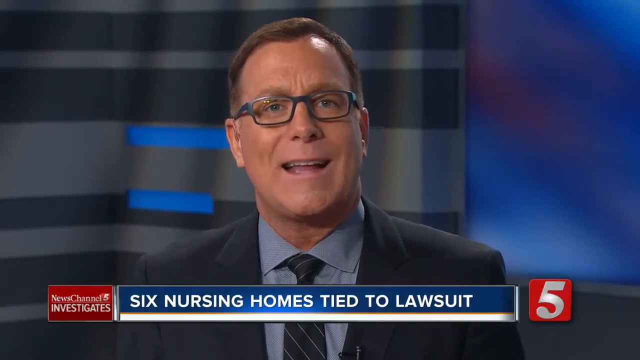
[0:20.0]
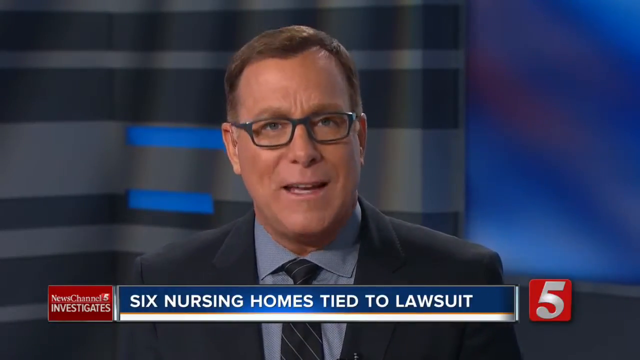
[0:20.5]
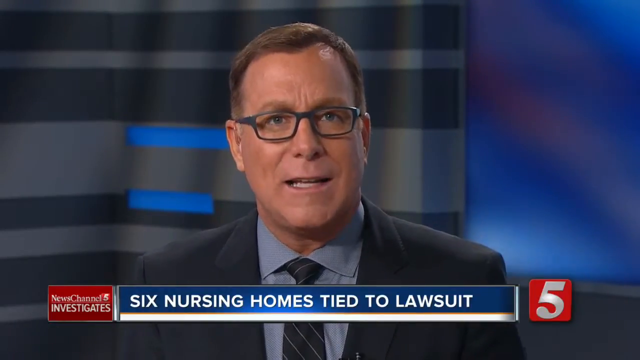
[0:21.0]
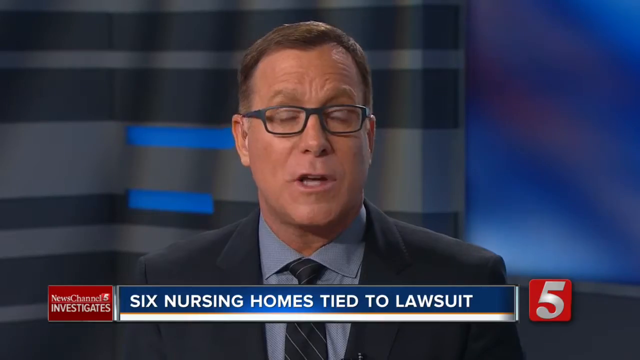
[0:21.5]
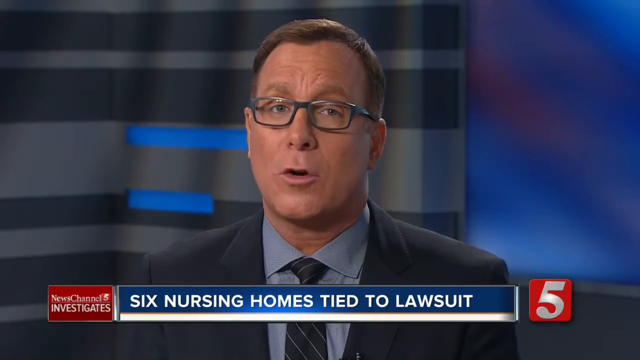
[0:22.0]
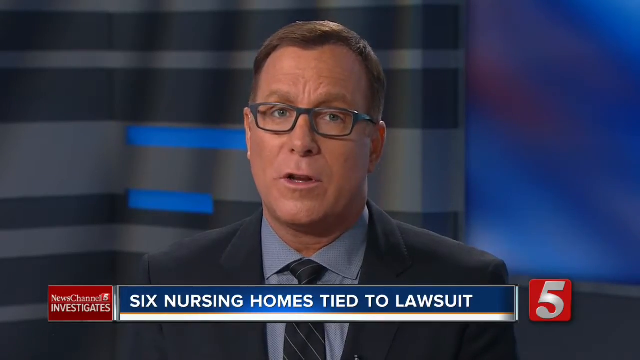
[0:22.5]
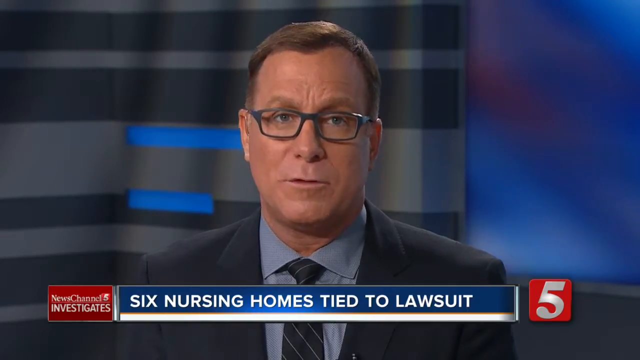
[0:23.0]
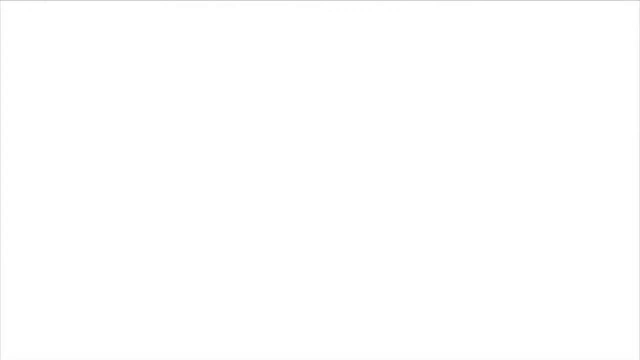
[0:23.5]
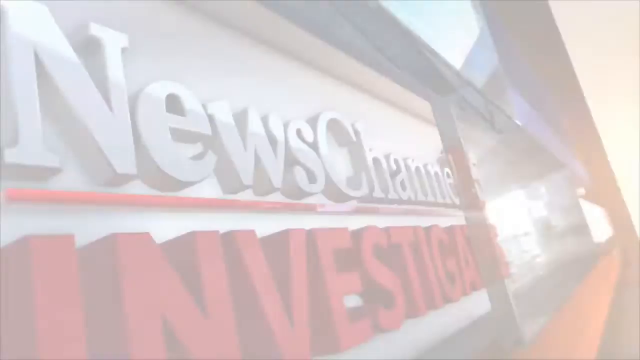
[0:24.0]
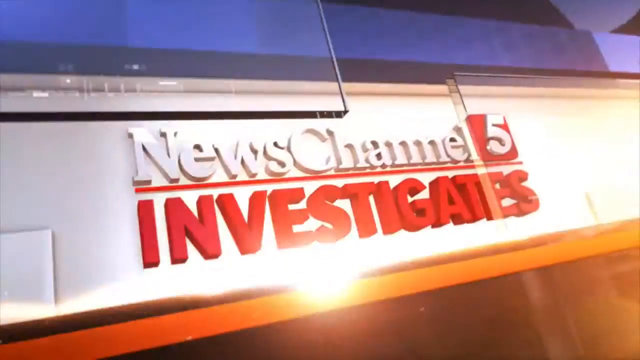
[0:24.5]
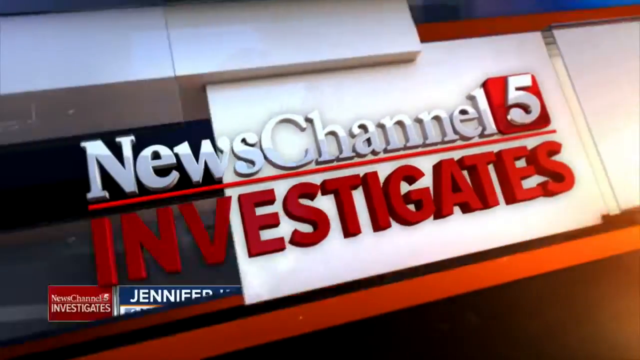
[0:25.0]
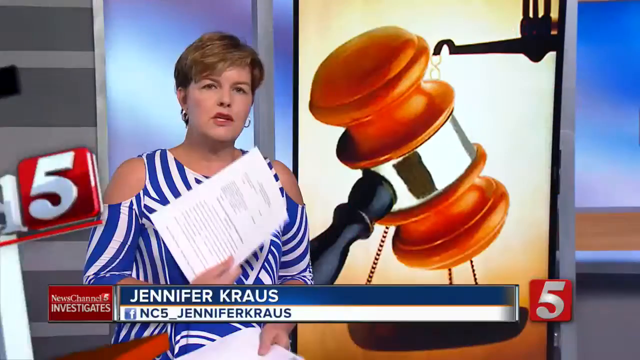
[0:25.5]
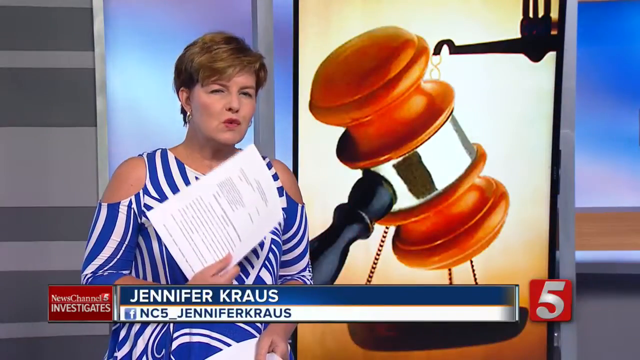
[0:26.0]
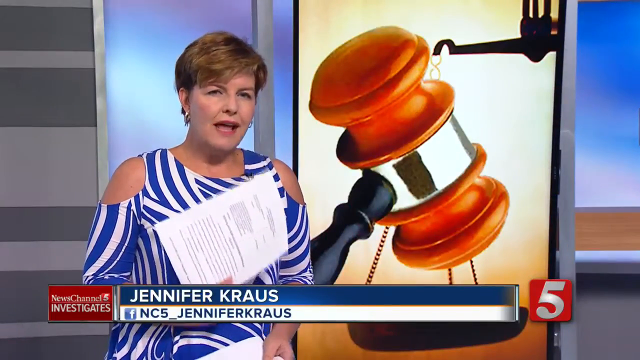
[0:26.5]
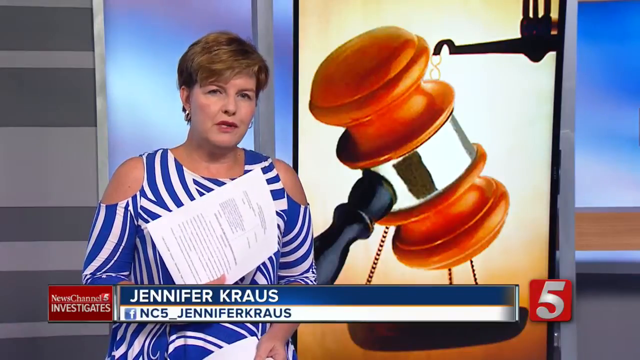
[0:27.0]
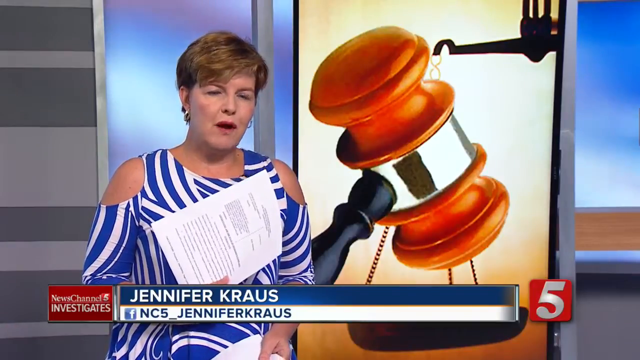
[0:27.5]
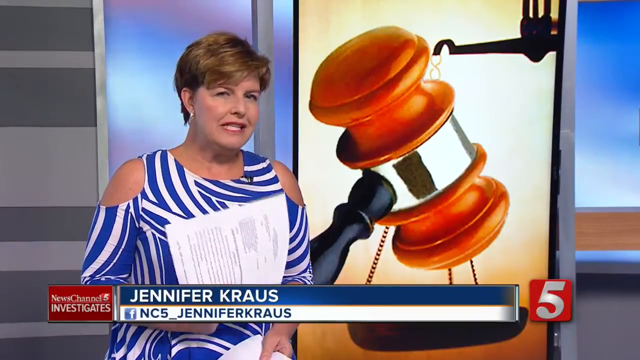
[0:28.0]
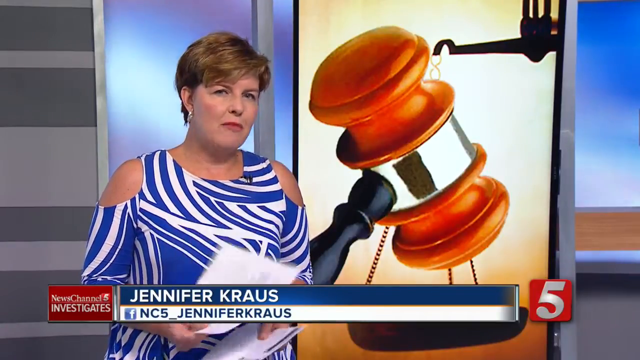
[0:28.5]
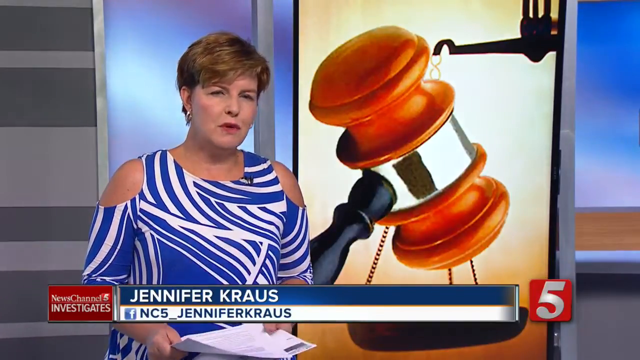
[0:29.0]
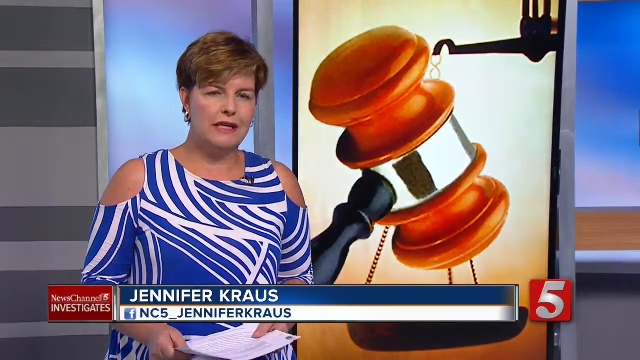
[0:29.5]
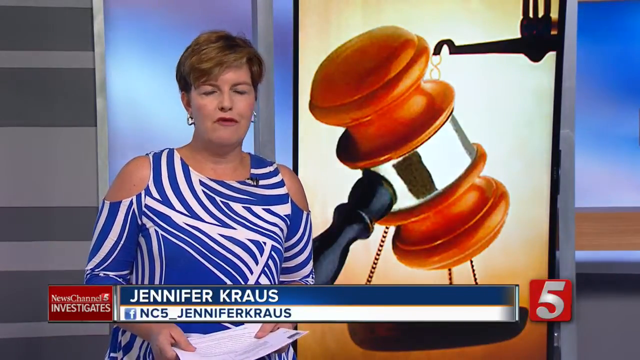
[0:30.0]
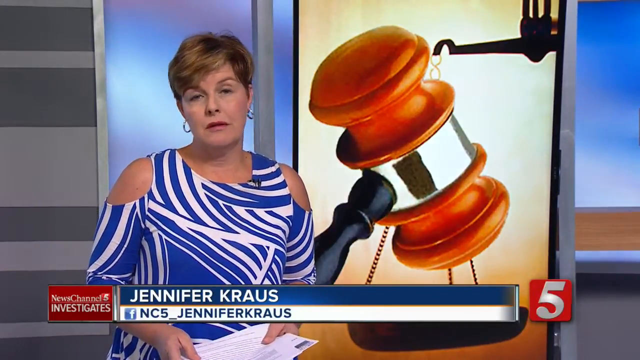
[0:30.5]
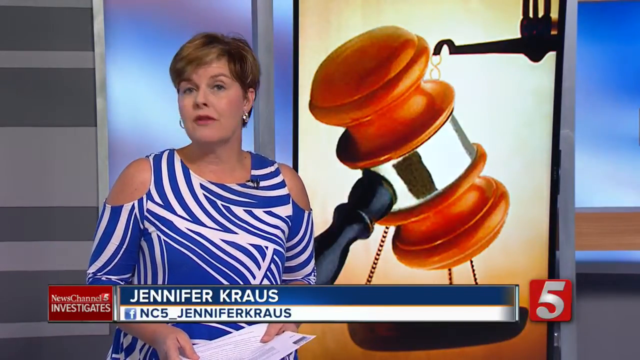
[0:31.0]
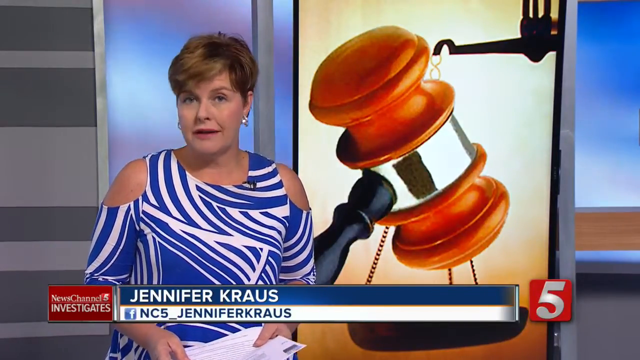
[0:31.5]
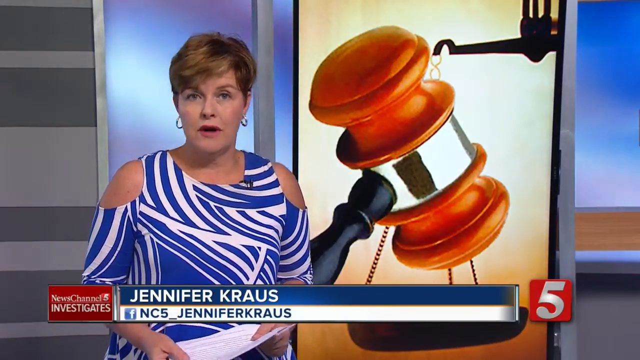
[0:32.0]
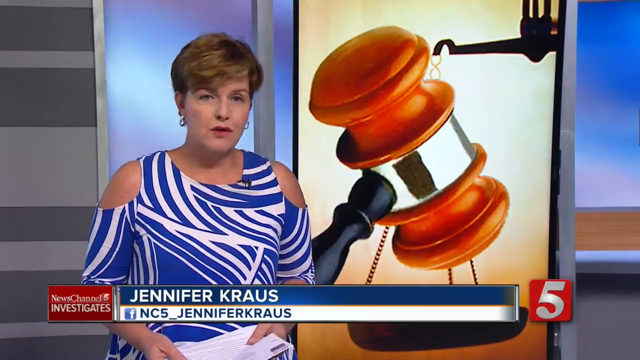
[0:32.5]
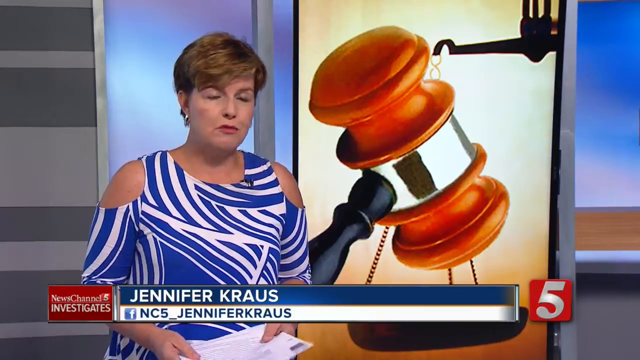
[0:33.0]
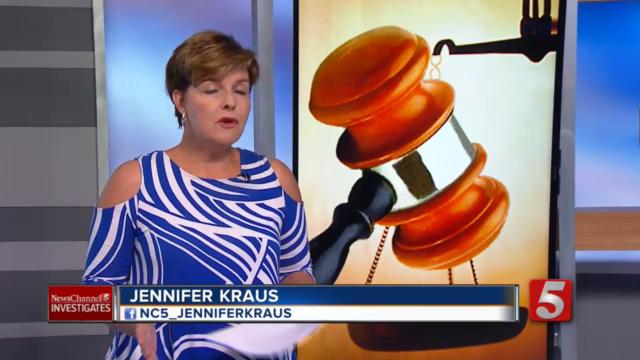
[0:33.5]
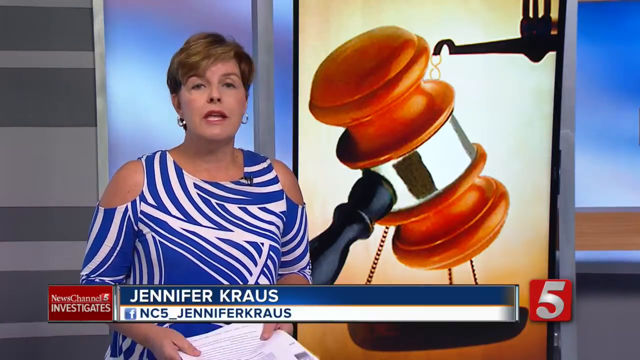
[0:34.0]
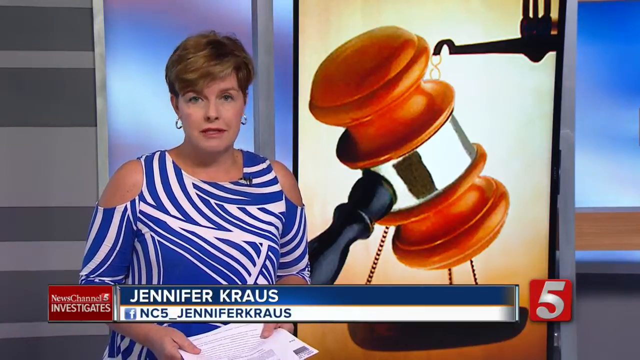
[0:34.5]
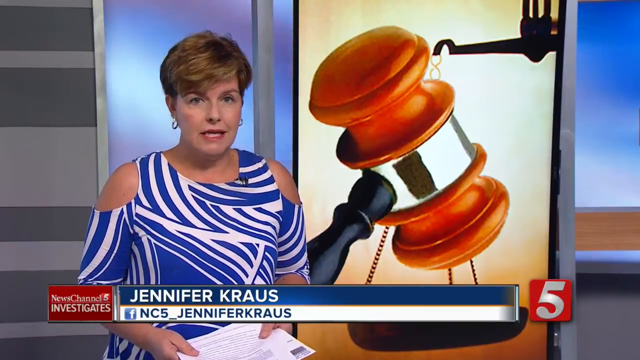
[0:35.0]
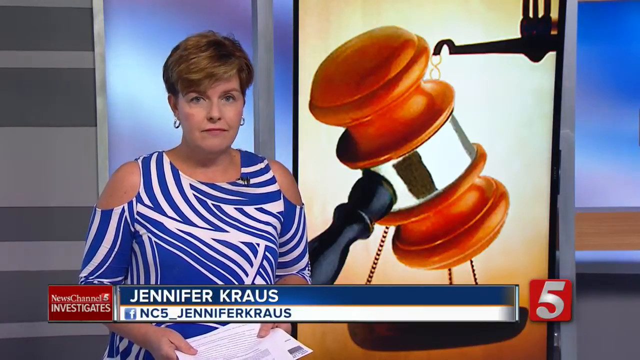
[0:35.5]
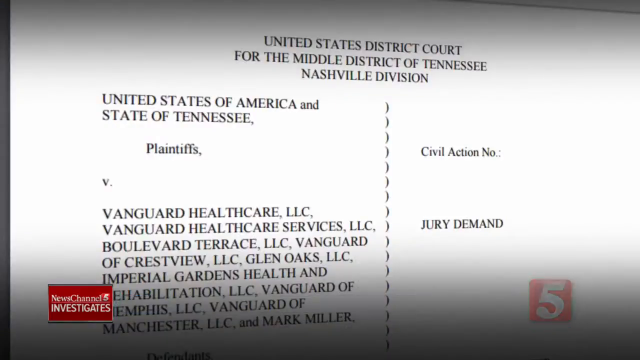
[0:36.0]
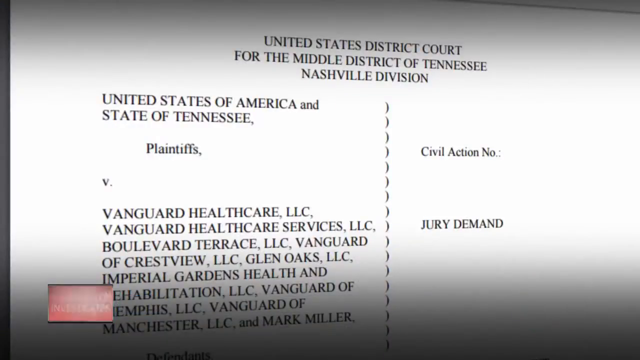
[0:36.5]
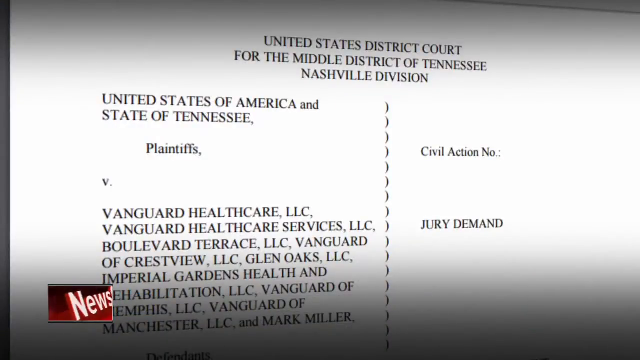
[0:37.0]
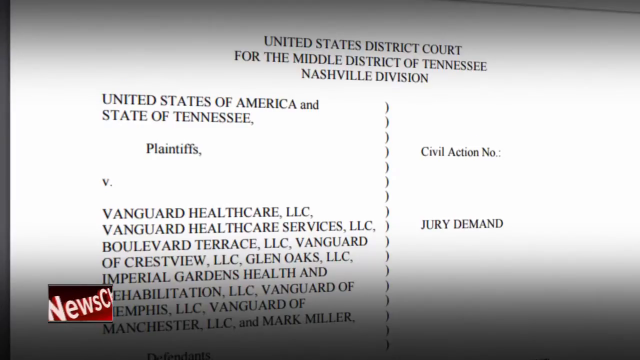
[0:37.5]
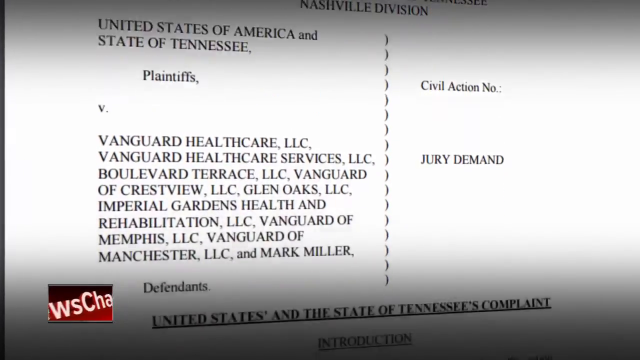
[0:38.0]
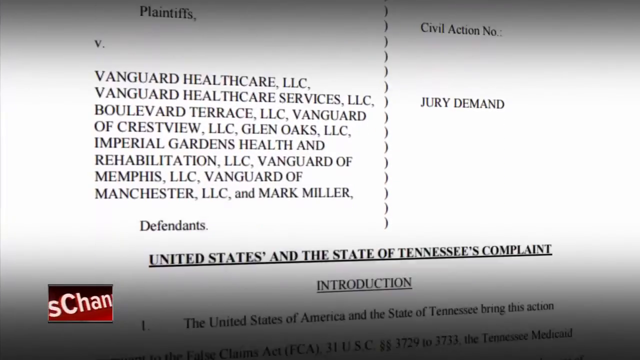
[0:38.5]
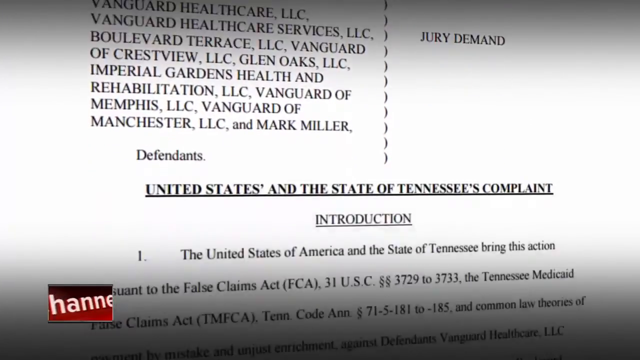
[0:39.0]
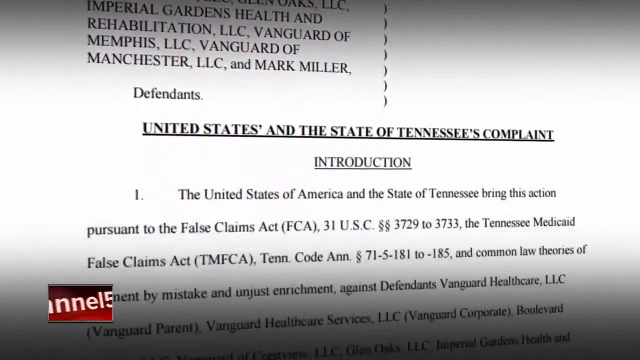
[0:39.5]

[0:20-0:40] The camera switches to Jennifer Krause, a reporter, identified as NC5 Jennifer Krause on Twitter. Behind her, a screen shows a judge's gavel and the chains of justice. She holds a white paper and is talking, apparently about the case. She wears an unusual blue blouse with white zebra-type stripes running both horizontally and vertically. The next scene shows a lawsuit document from the United States District Court, Middle Tennessee, Nashville Division. The plaintiffs are suing Vanguard Healthcare LLC, Vanguard Healthcare Services LLC, Boulevard Terrace LLC, Vanguard of Crestview LLC, Glen Oaks LLC, Imperial Gardens Health and Rehabilitation LLC, Vanguard of Memphis LLC, Vanguard of Manchester LLC and Mark Miller.